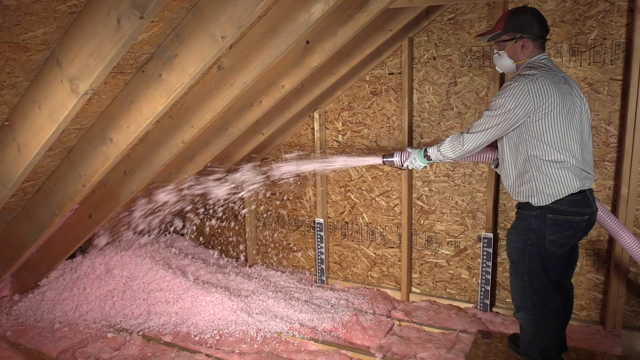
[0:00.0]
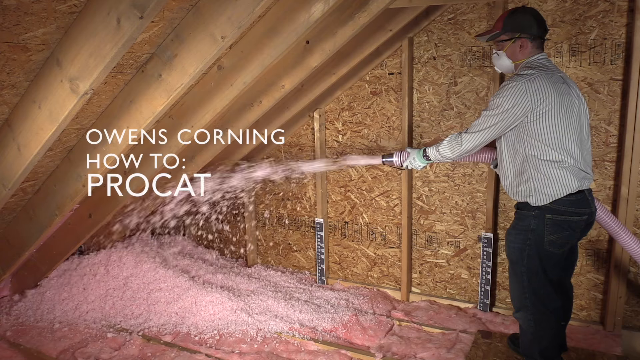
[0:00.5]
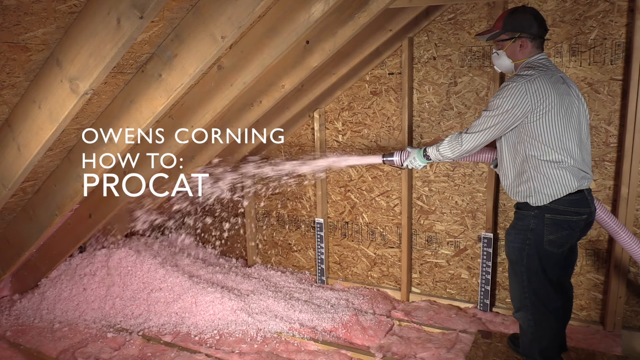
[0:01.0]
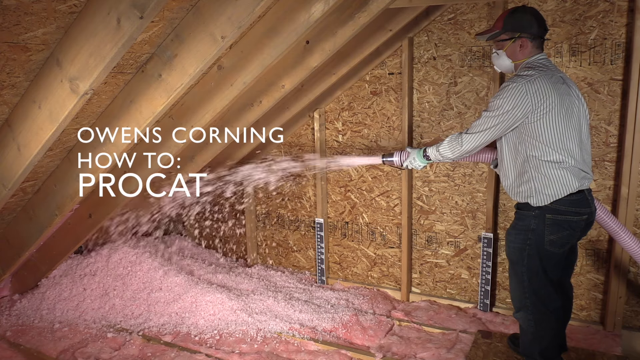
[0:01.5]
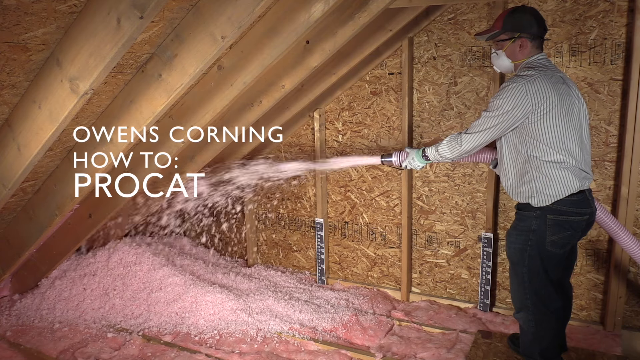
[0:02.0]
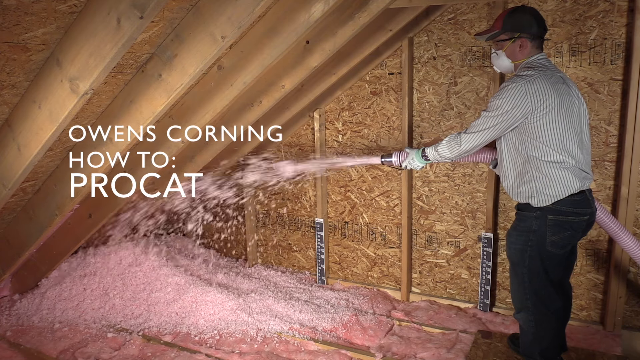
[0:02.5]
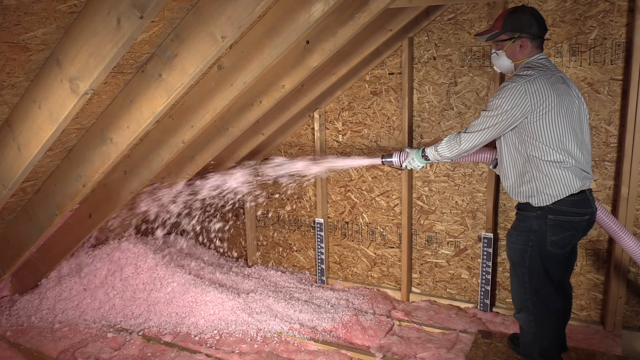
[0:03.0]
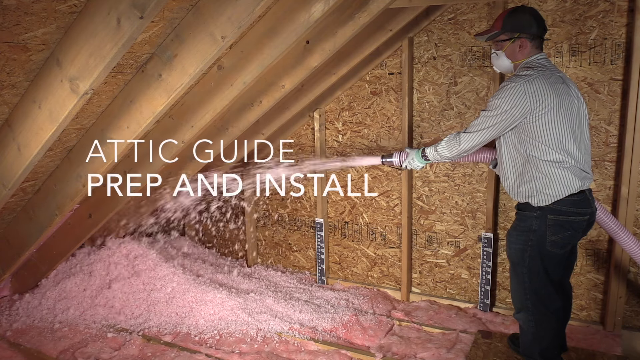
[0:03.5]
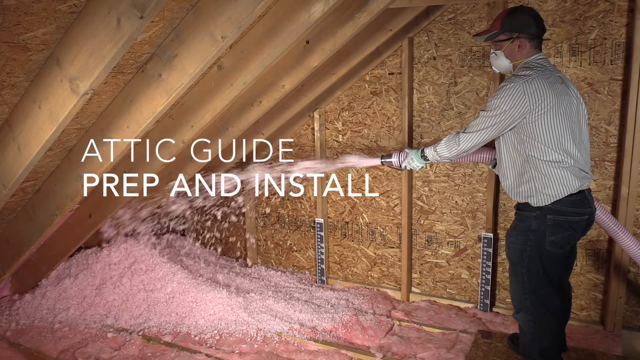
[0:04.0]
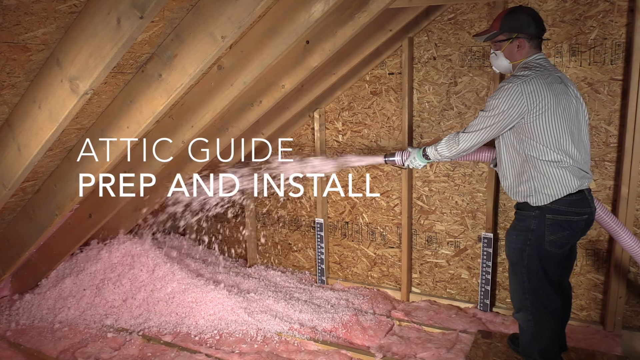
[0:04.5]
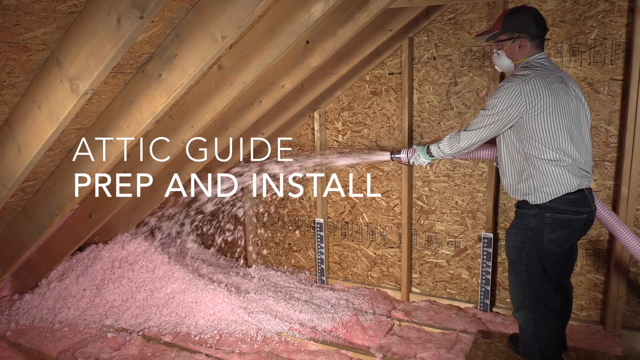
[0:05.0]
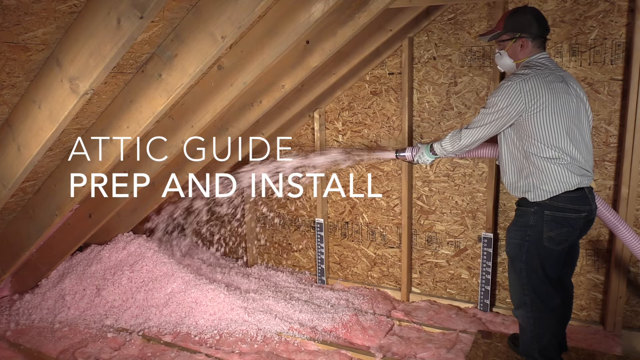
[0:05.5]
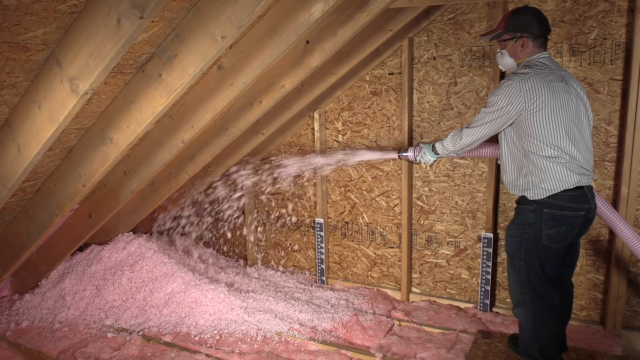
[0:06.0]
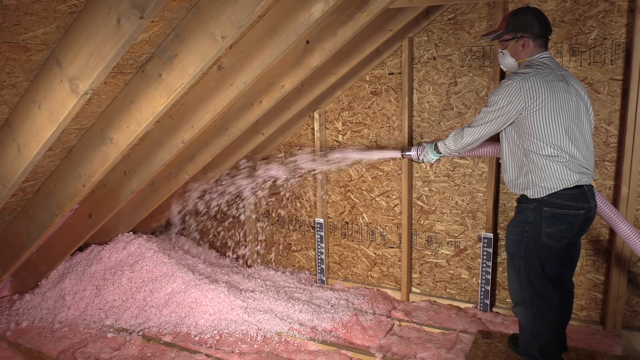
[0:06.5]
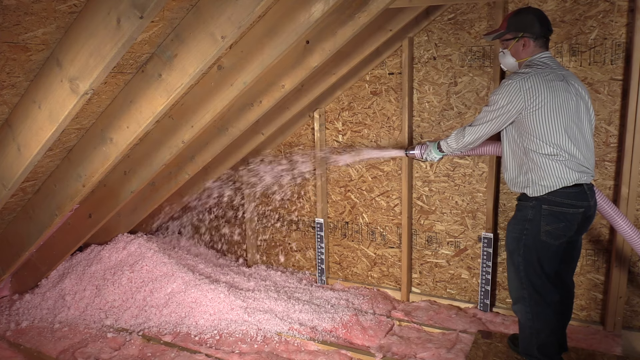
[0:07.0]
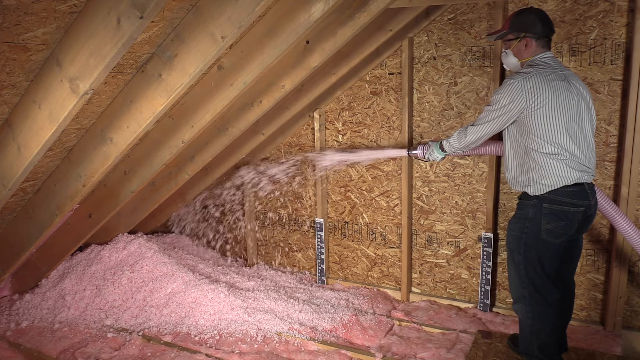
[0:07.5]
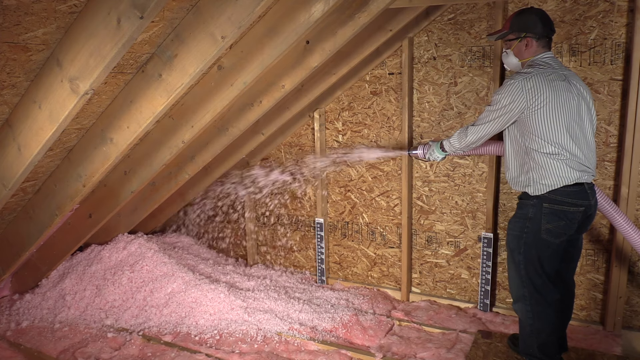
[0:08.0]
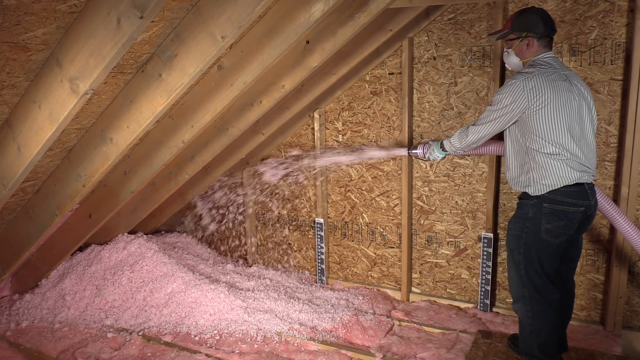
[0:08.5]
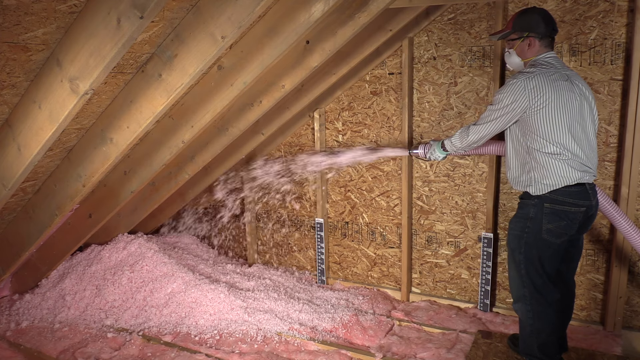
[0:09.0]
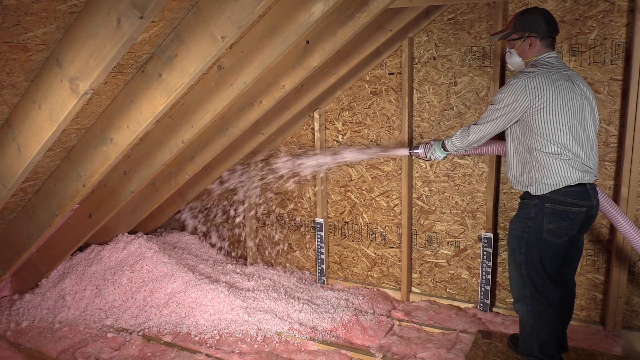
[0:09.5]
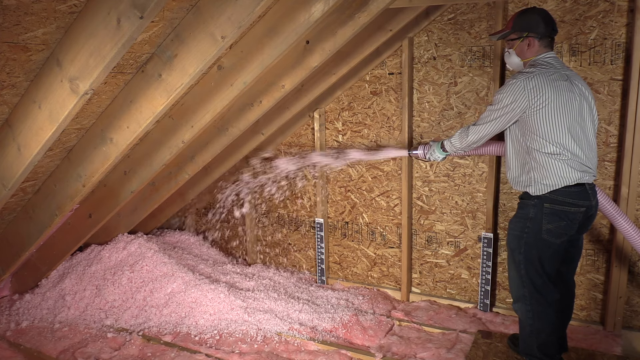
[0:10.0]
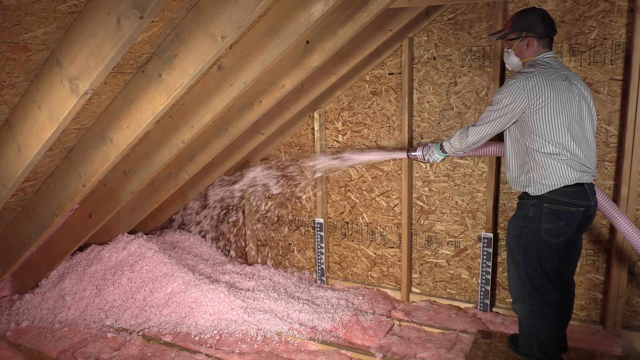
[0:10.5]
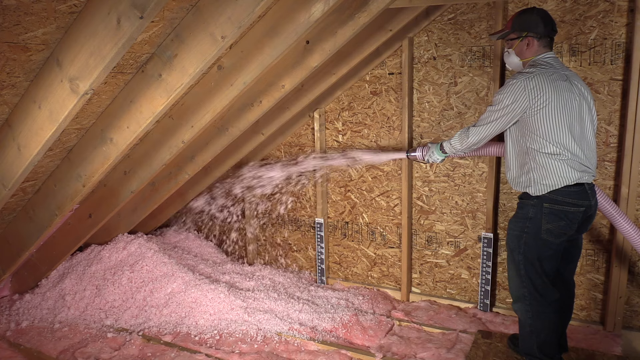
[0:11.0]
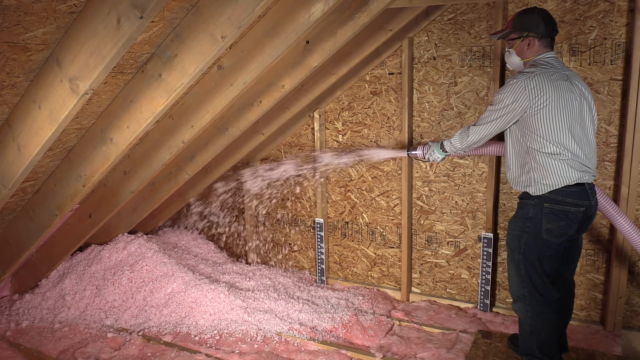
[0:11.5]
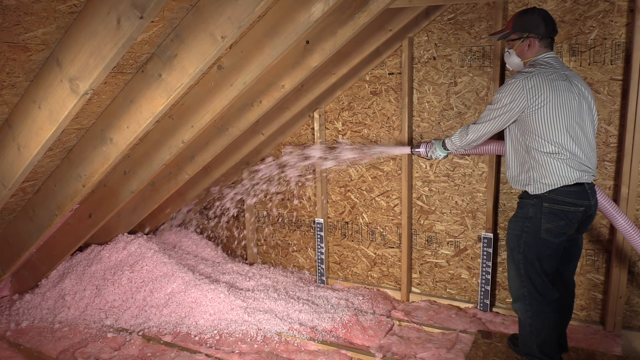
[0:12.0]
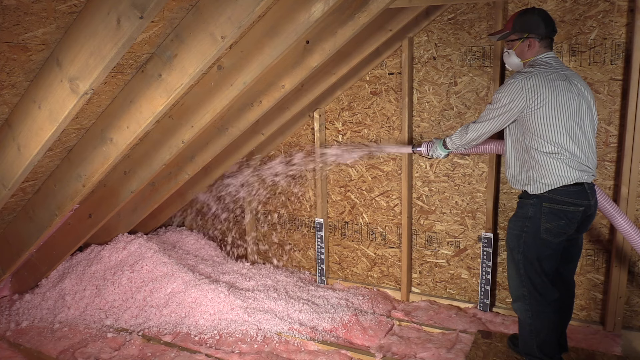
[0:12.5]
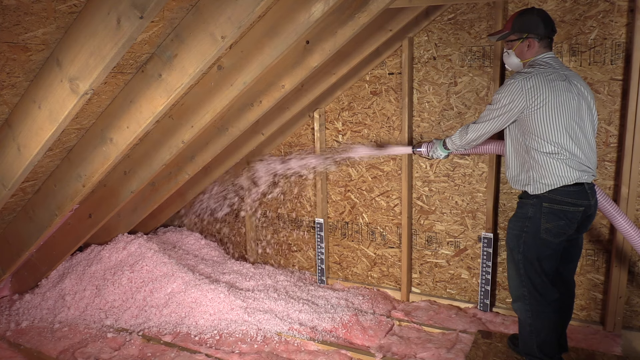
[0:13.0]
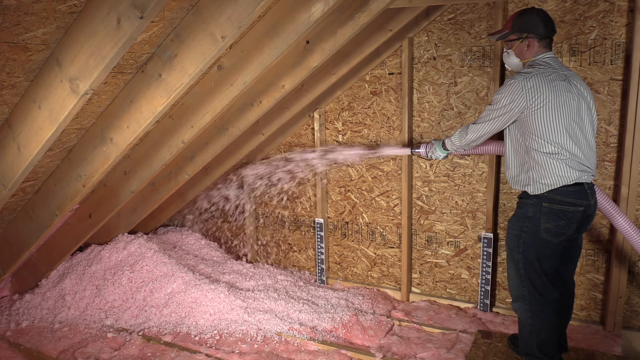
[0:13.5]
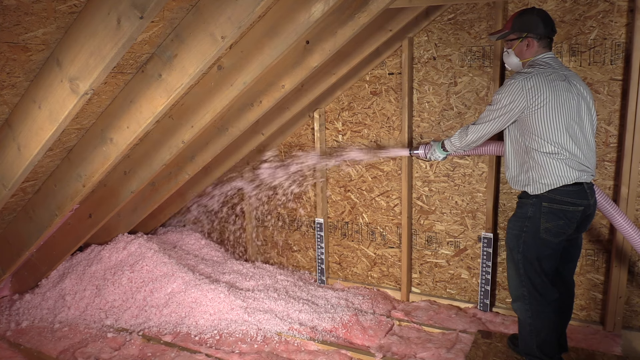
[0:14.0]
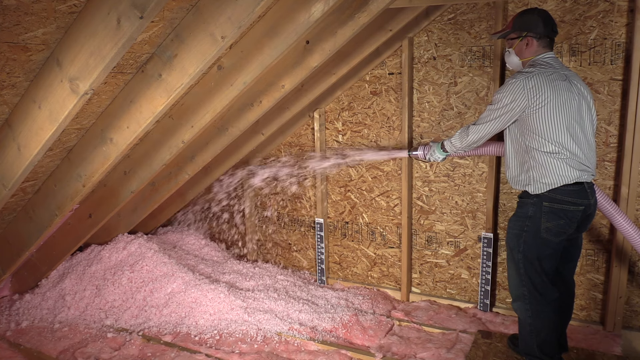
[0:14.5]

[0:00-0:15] Inside an attic, a man on the right-hand side of the screen faces left, holding what looks like a hose with insulation shooting out onto the attic floor. He wears a gray bill baseball cap, a white safety mask, a white and gray shirt with thin stripes, and black pants that look like jeans. The wall in the back looks like particle board, and on the left the ceiling slants down; there is no wall there, and it looks like the left-hand part of the inside of the roof. There are wood beams in the area where he is aiming. As the material shoots out of the hose, a big pile of pink particulate matter, apparently insulation, builds up on the floor where he aims. Words on the screen say "Owen's Corning, How to Procat, Attic Guide Prep and Install."